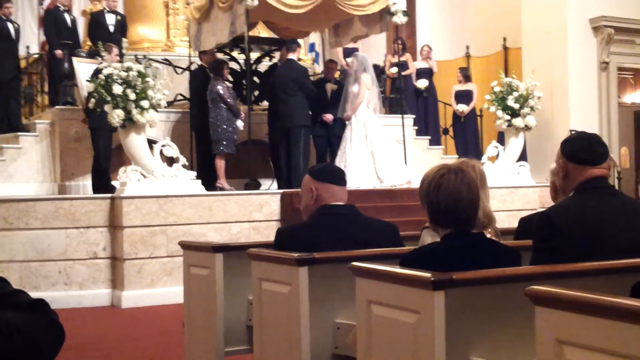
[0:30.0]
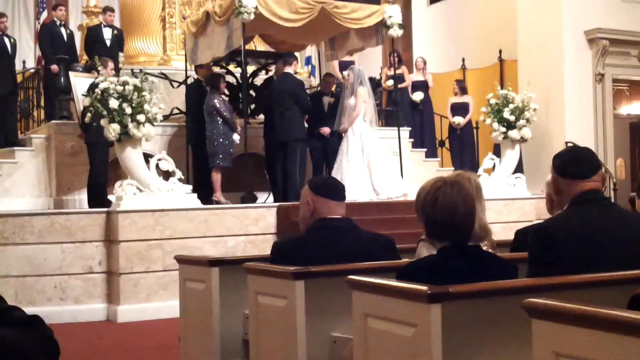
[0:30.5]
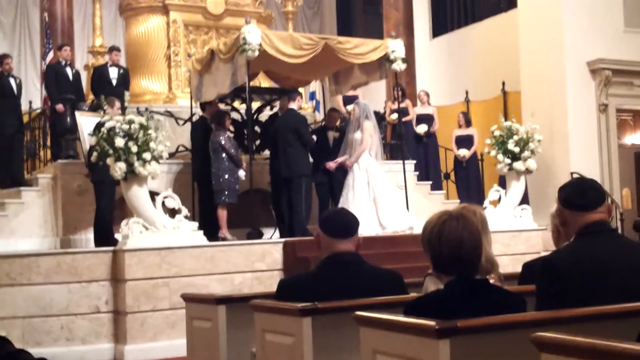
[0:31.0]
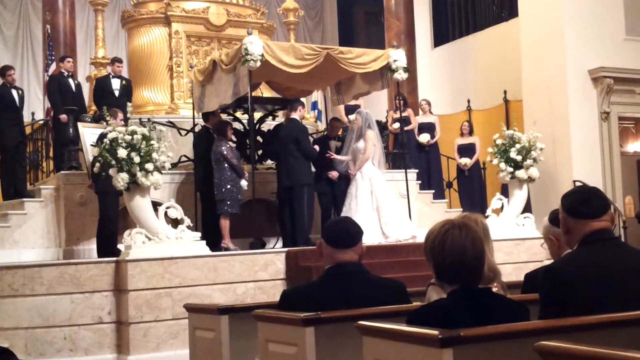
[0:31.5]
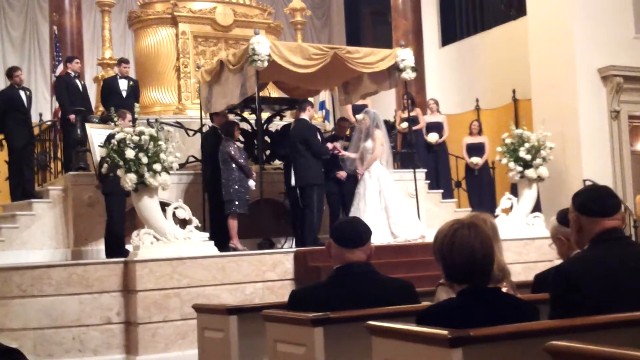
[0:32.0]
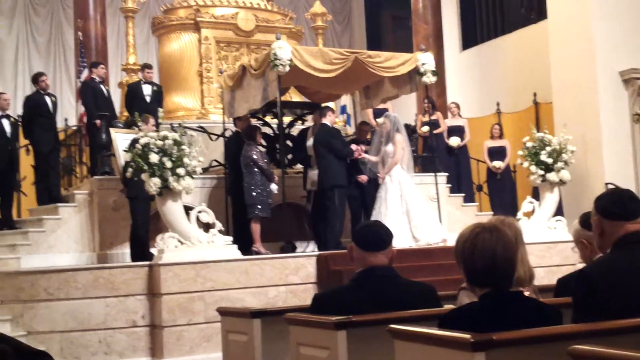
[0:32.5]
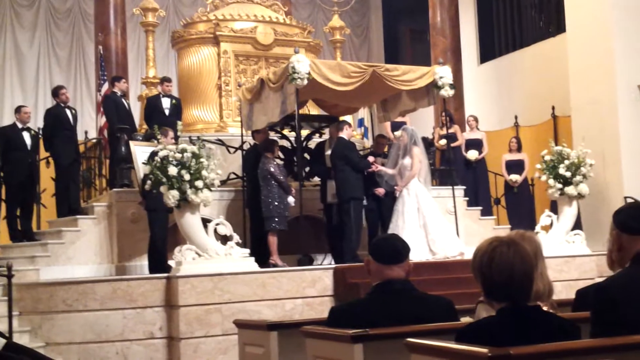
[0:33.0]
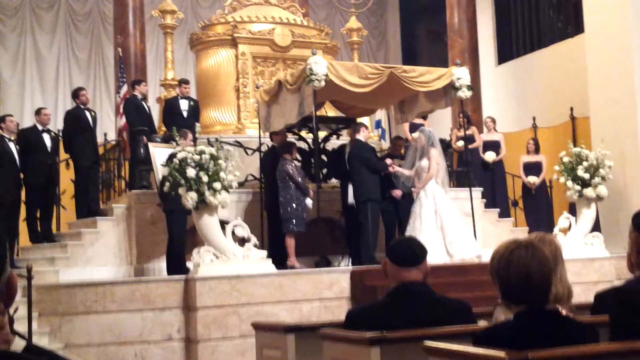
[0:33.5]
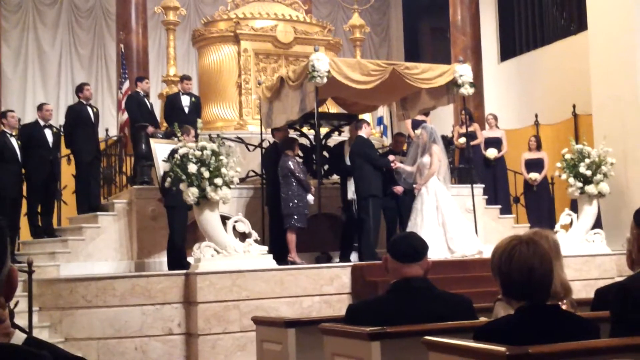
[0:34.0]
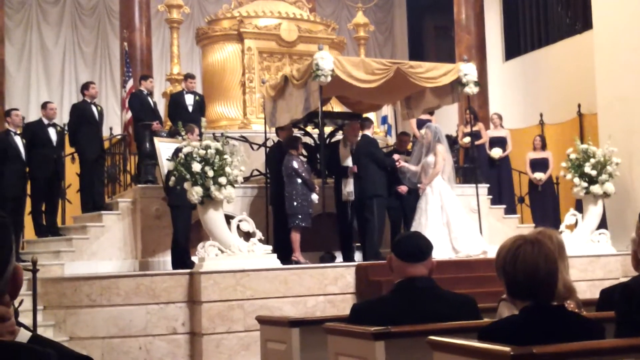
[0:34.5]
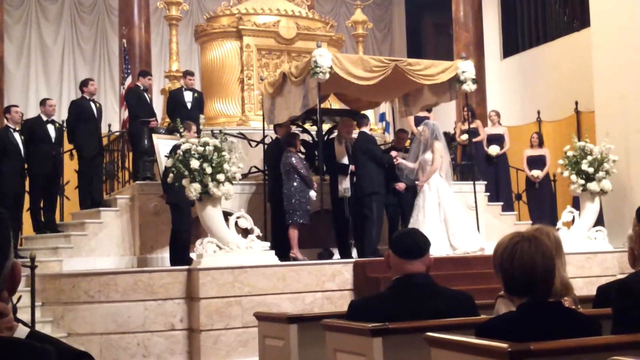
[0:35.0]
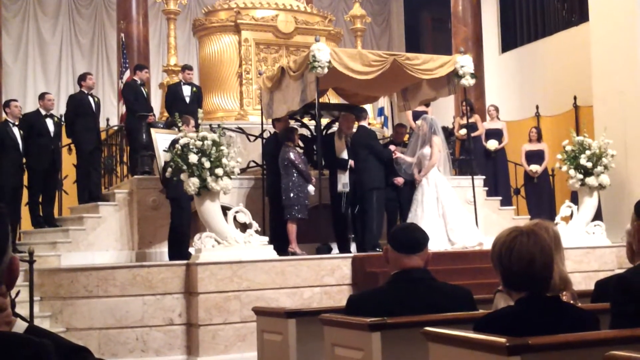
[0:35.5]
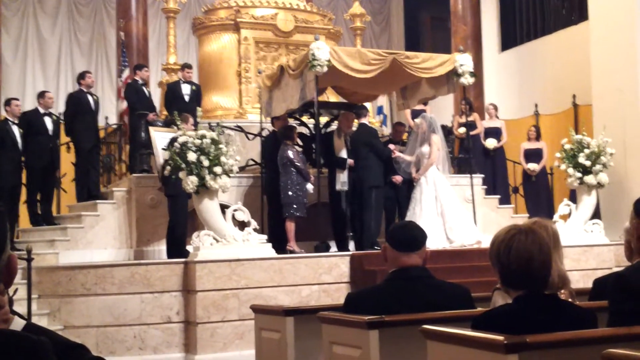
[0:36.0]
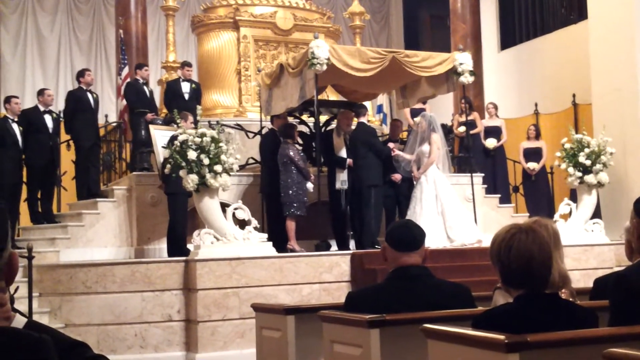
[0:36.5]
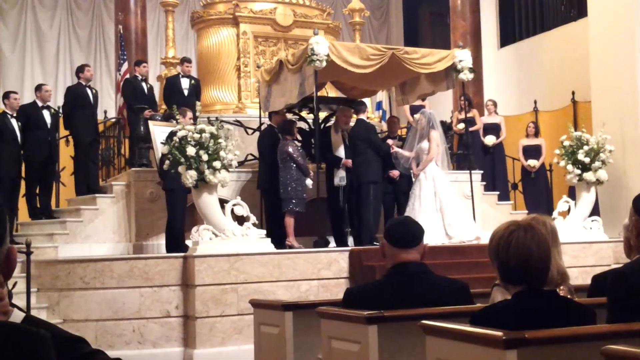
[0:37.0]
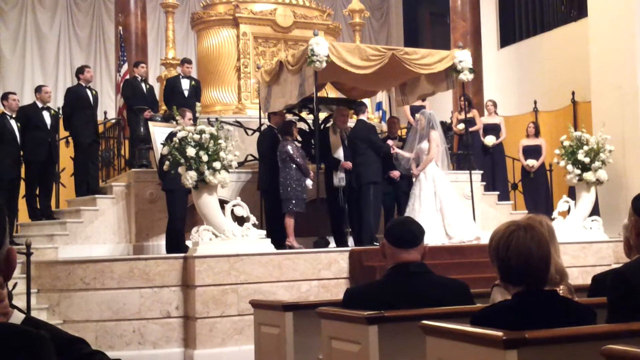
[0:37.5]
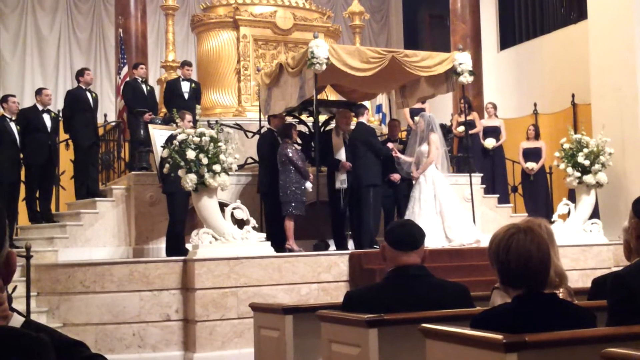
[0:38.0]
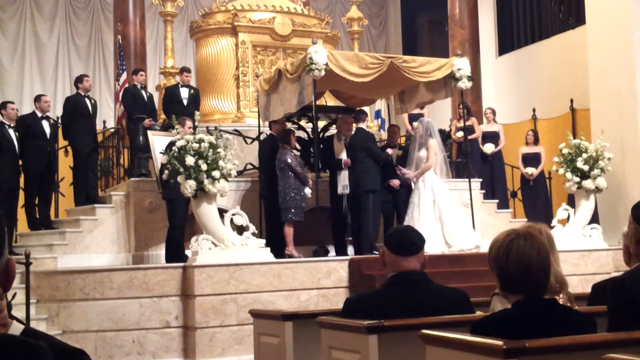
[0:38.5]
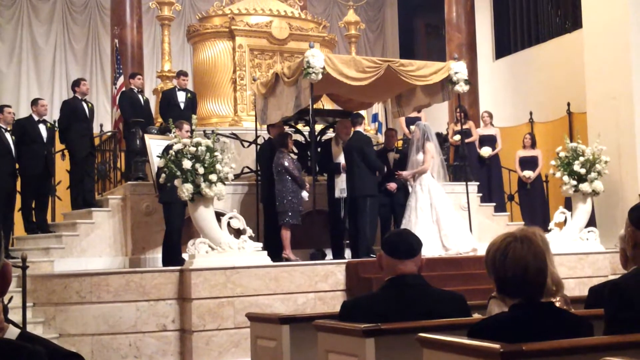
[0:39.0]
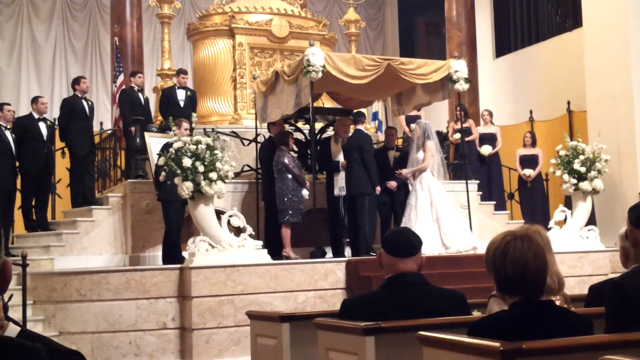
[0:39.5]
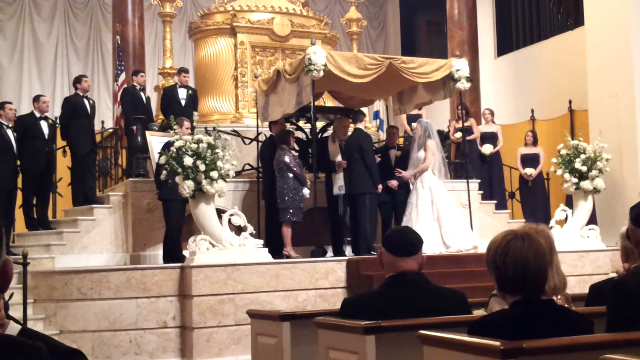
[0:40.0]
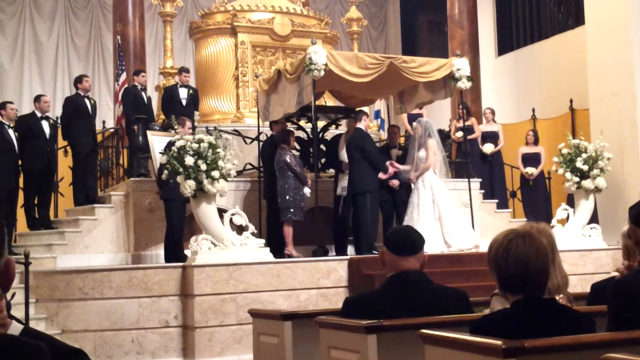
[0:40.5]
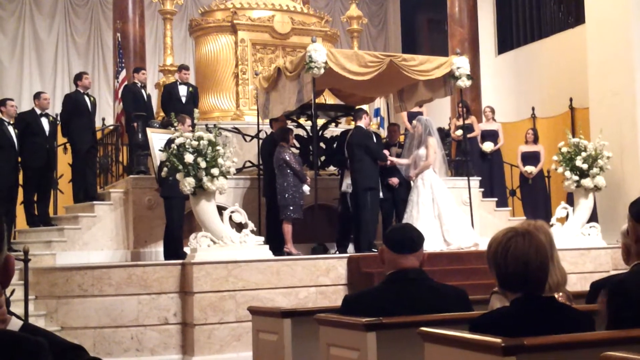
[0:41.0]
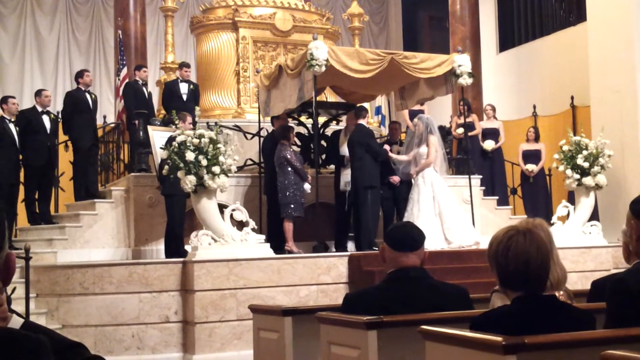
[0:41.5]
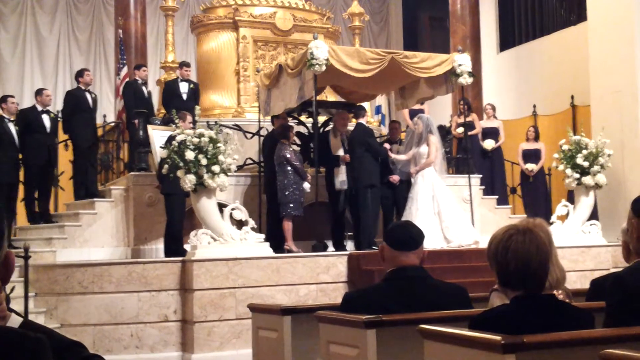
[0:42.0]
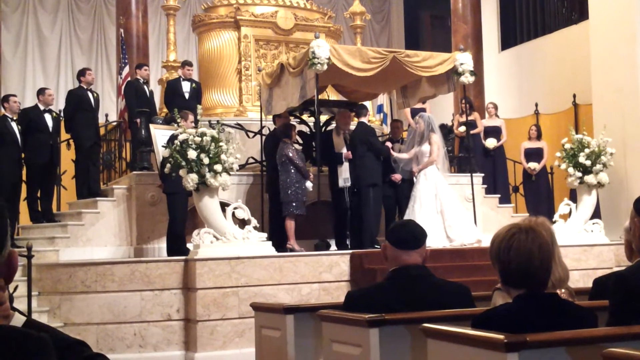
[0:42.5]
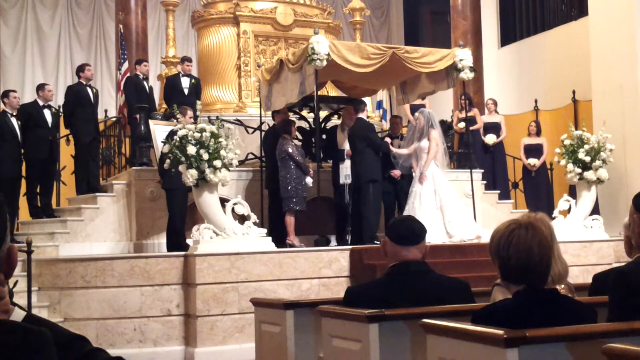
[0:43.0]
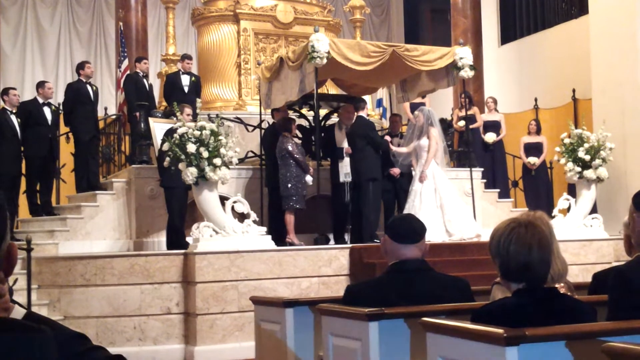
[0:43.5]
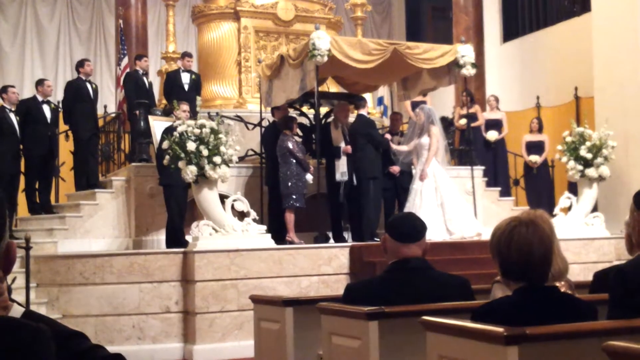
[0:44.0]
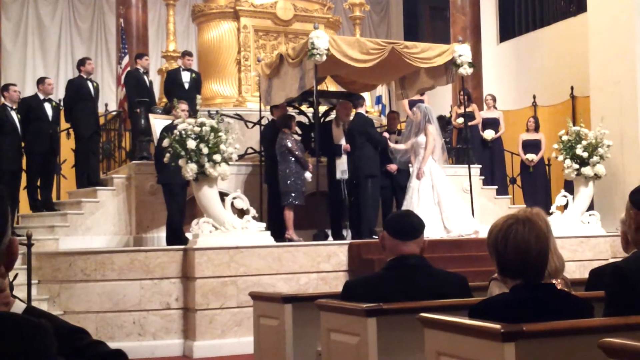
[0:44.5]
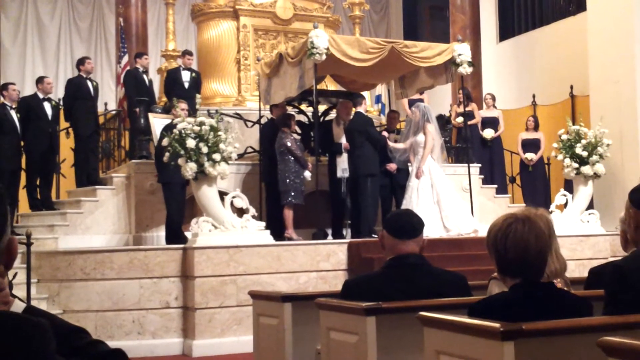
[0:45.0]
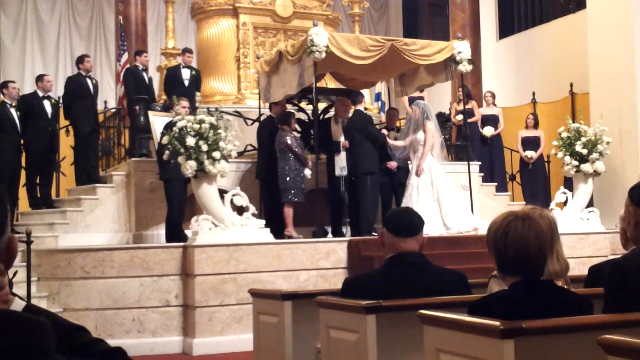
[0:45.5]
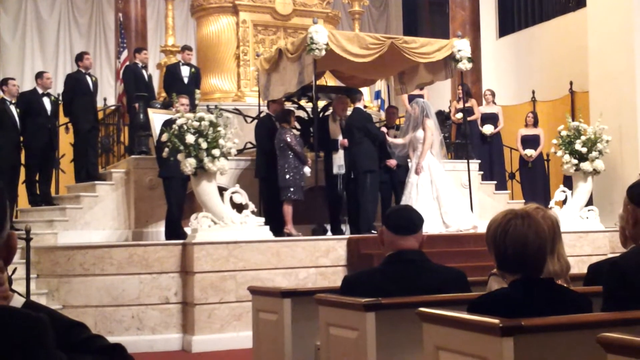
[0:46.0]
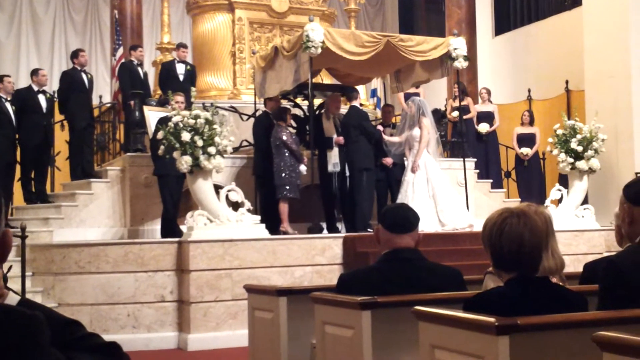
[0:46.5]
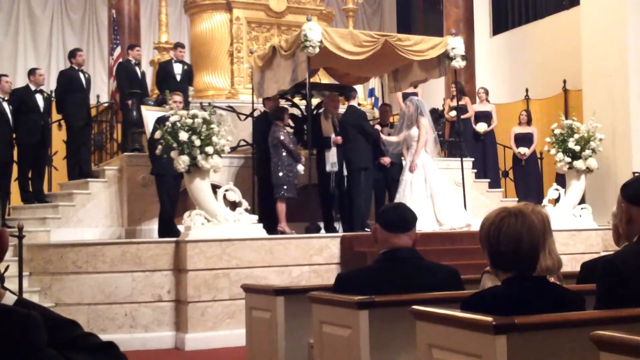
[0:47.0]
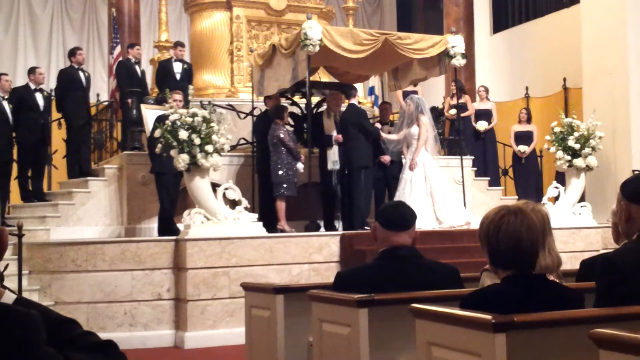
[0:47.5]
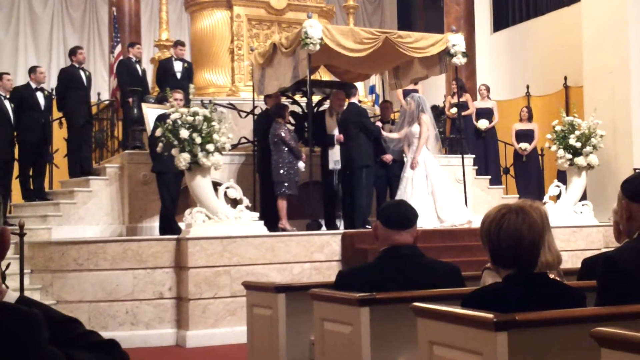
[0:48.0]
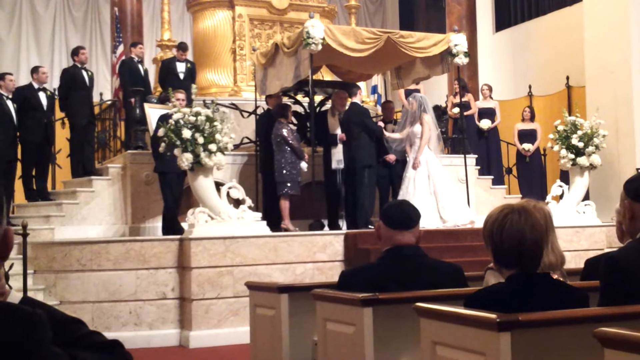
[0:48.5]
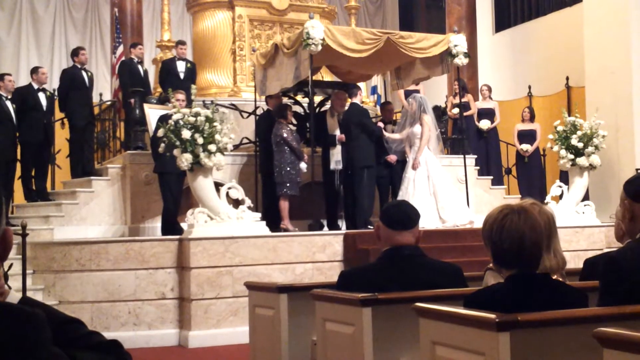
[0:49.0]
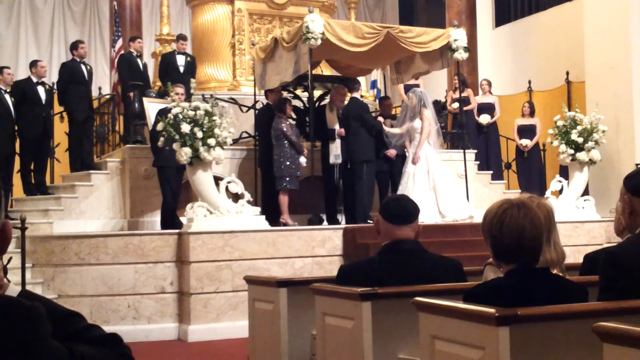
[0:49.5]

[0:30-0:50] A wedding ceremony takes place in a church, seen from behind a few pews with the camera angled towards the altar. A few people in the pews face forward. The floor is red and carpeted, and the stairs up to the altar are stone or marble. Off to the sides of the altar are some elegant vases with flowers. Stairs lead up behind the altar; the bridesmaids are progressing up the stairs on the right and the groomsmen up the stairs on the left. The altar itself appears to be a canopy with golden fabric on the top. Under the canopy, the minister faces out towards the bride and groom, speaking and performing the ceremony. The bride and groom face the minister and hold hands; the groom is in a traditional black tux and the bride in a traditional white gown with a veil. A few other people are under the canopy with them, presumably parents or other important people serving as witnesses. The camera work is a bit shaky, and partway through the shot loses focus for a few seconds before regaining focus towards the end.